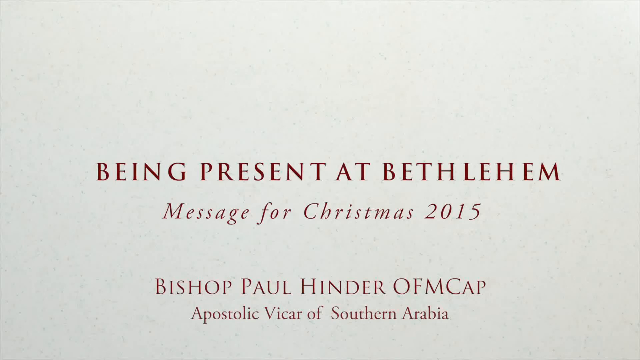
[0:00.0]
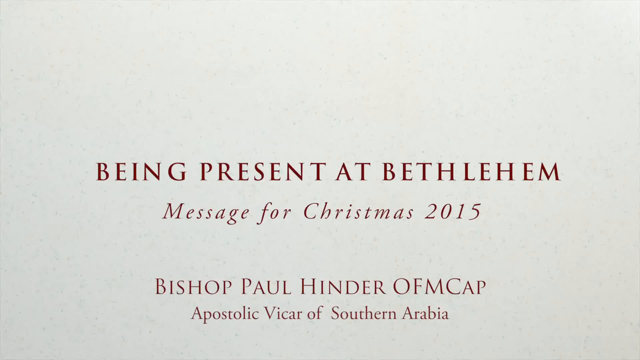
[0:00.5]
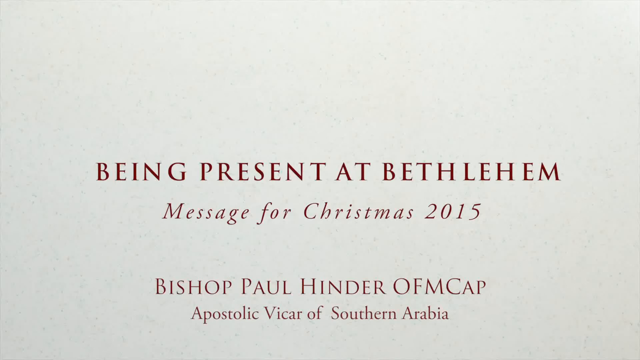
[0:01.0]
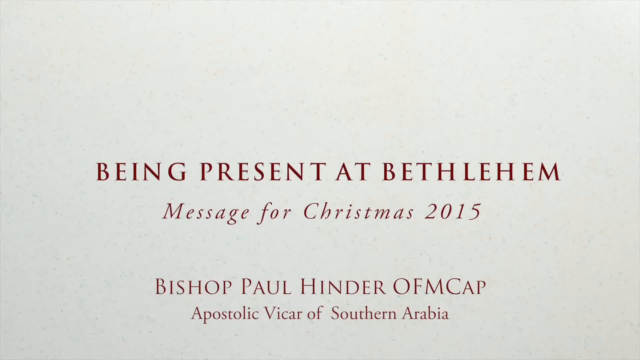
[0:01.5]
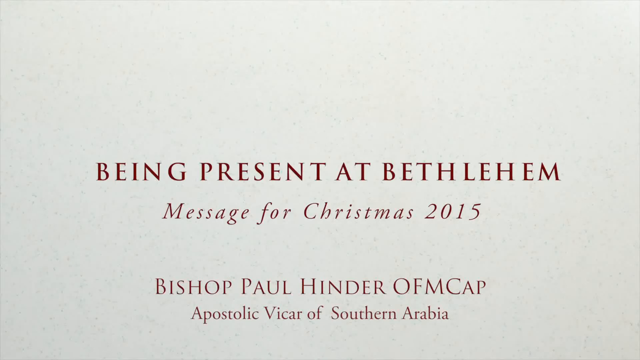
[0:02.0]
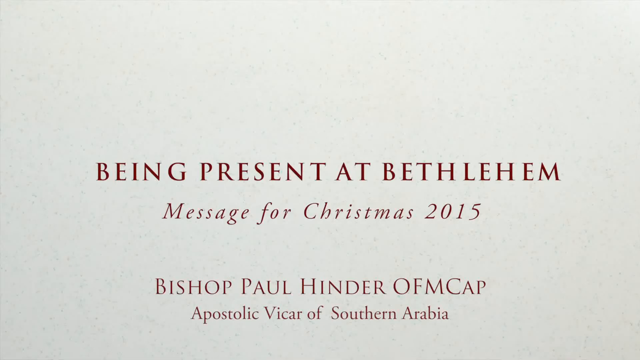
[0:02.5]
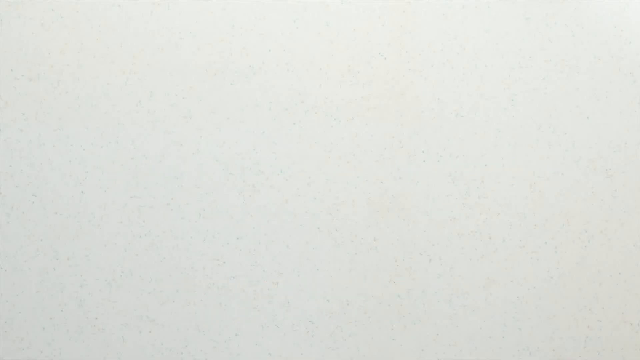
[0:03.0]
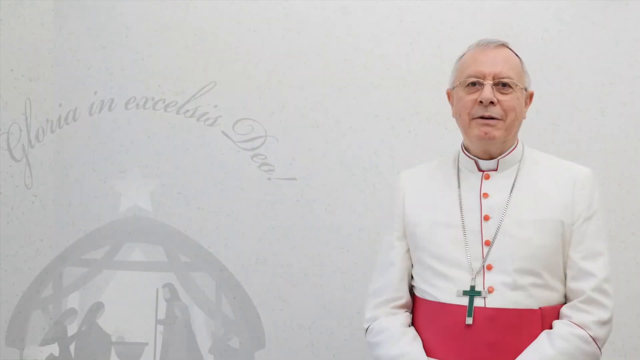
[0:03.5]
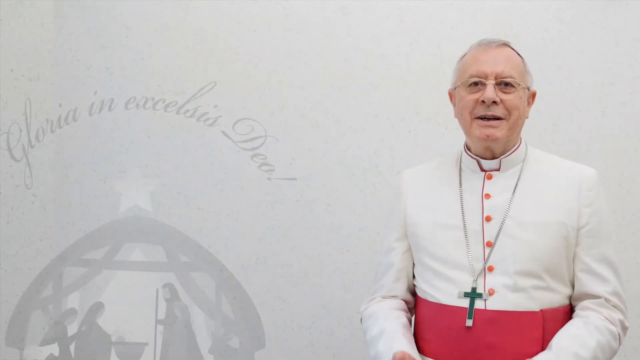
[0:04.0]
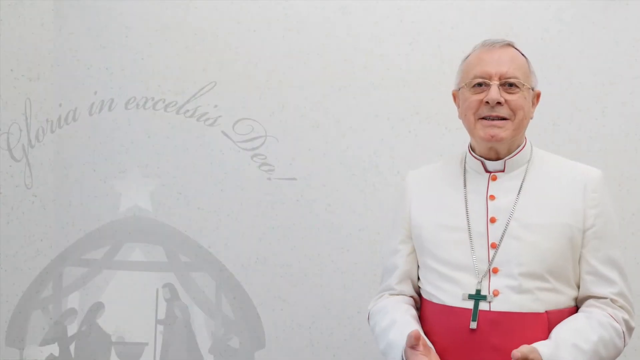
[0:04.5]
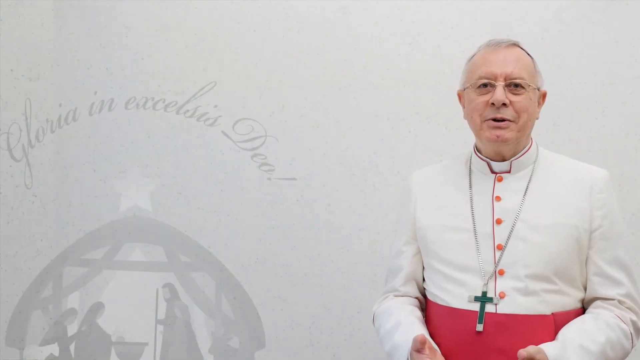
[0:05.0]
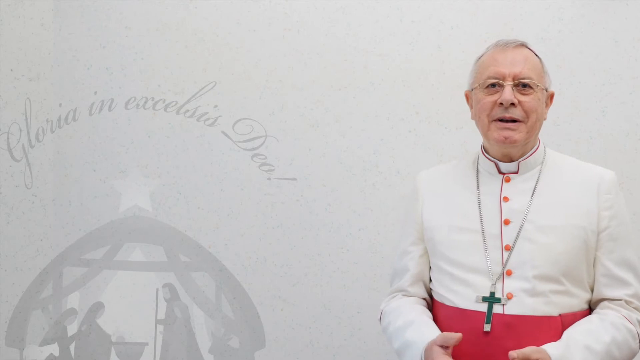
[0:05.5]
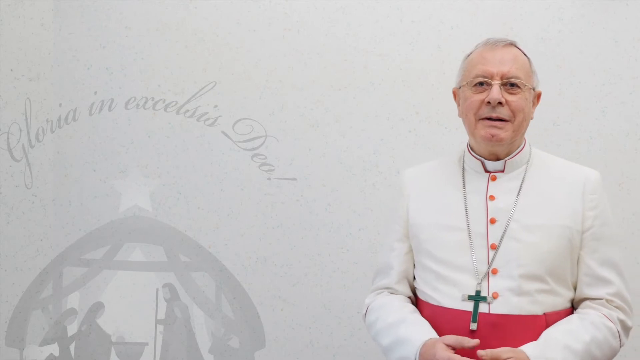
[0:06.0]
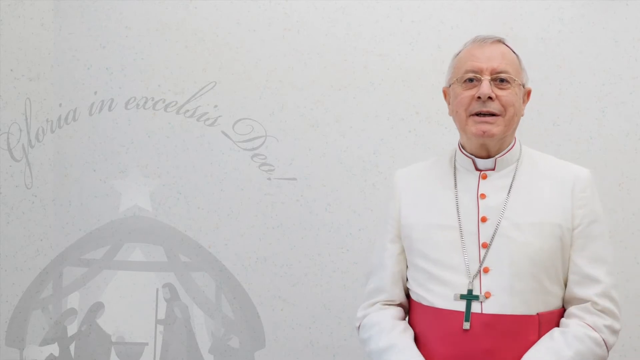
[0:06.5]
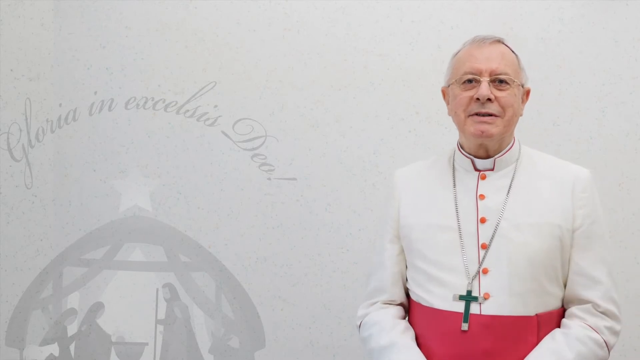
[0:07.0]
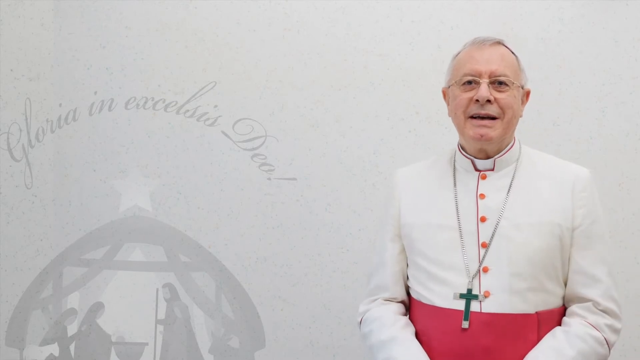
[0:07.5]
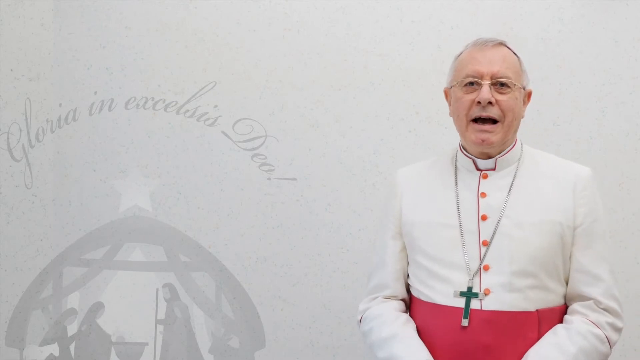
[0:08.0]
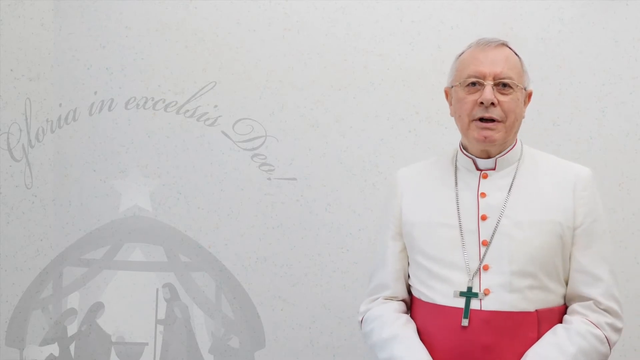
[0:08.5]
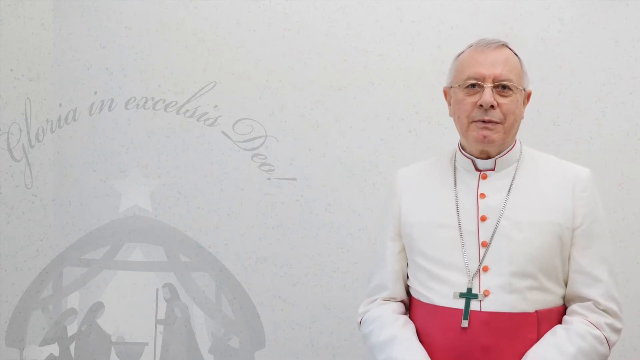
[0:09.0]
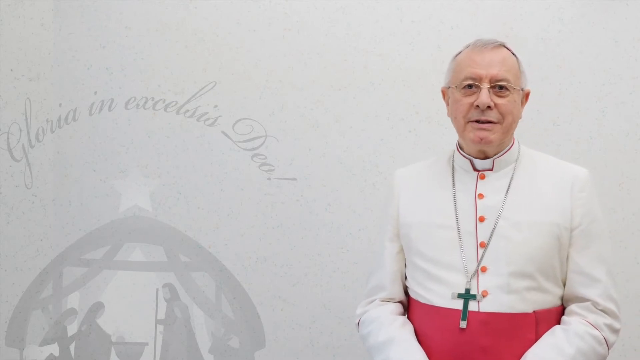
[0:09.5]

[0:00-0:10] On an off-white background, red letters read "Being Present at Bethlehem, Message for Christmas 2015 Bishop Paul Hinder Ofmcap, Apostolic Vicar of Southern Arabia." Then a man dressed as a priest appears on the screen with a cross in front of him. A message is written off to the side, along with what looks like an image of the nativity scene with a star on top. The man wears glasses, looks directly ahead, and smiles as he talks.